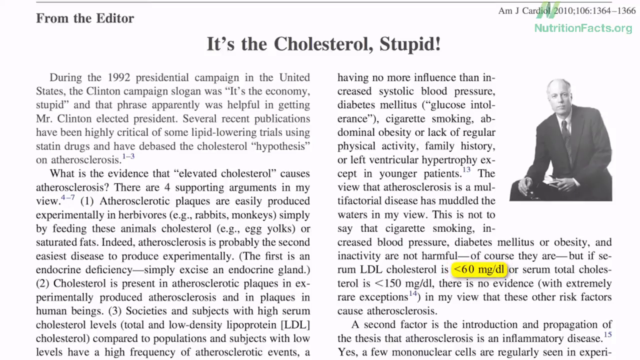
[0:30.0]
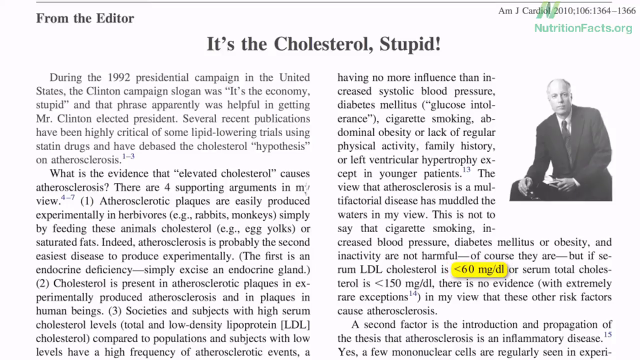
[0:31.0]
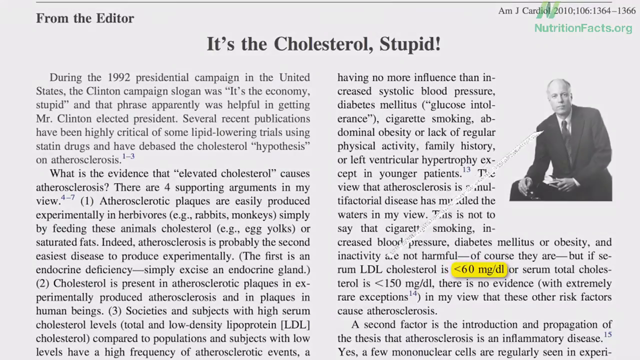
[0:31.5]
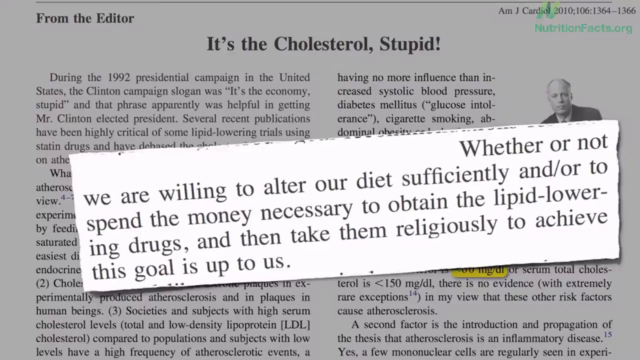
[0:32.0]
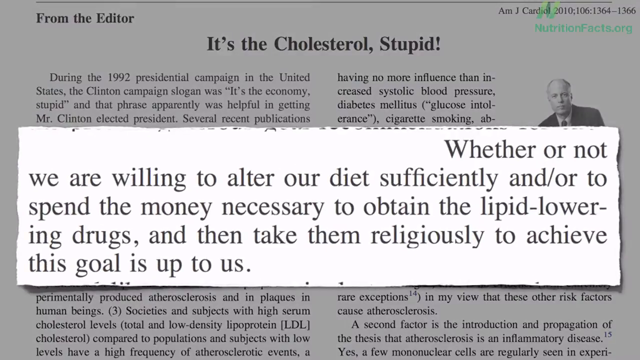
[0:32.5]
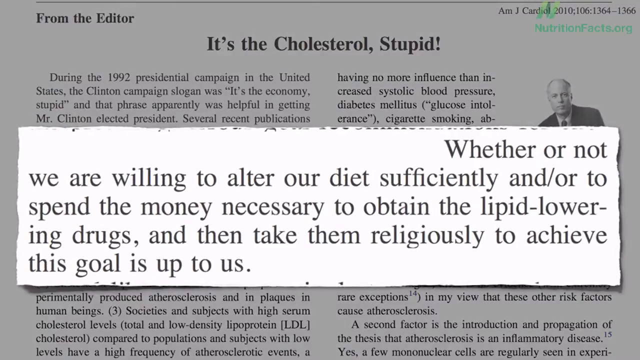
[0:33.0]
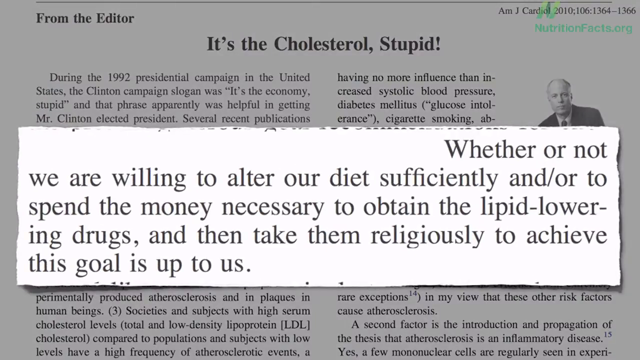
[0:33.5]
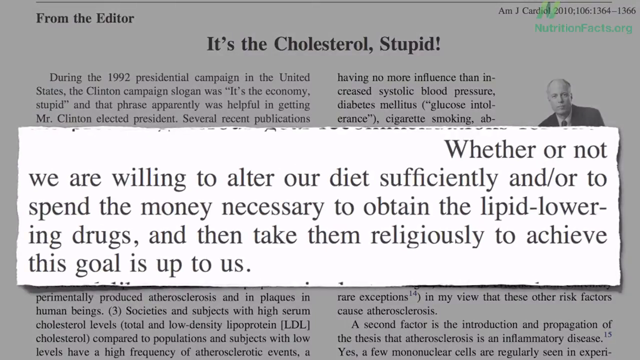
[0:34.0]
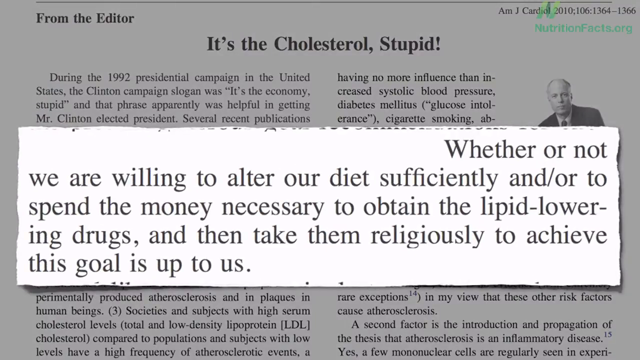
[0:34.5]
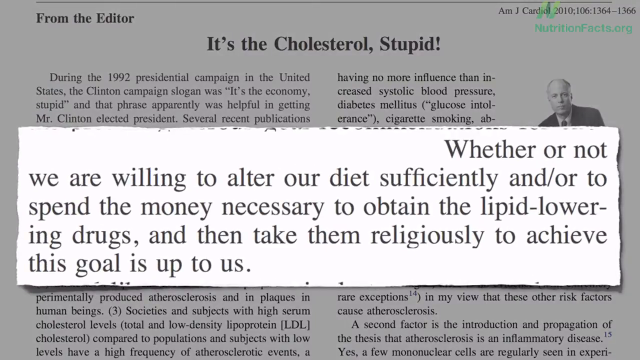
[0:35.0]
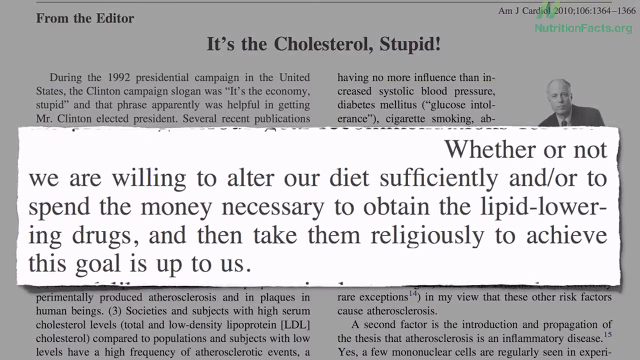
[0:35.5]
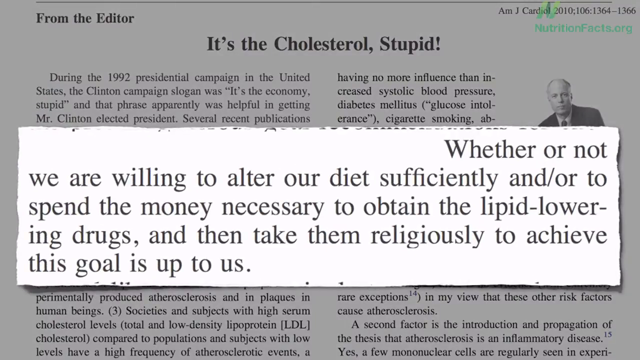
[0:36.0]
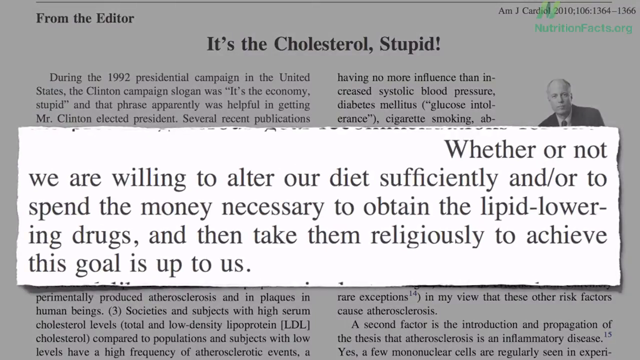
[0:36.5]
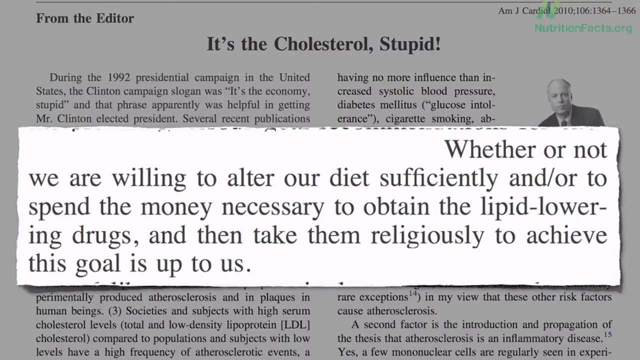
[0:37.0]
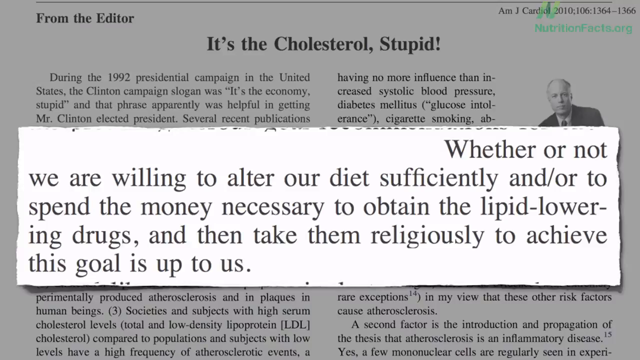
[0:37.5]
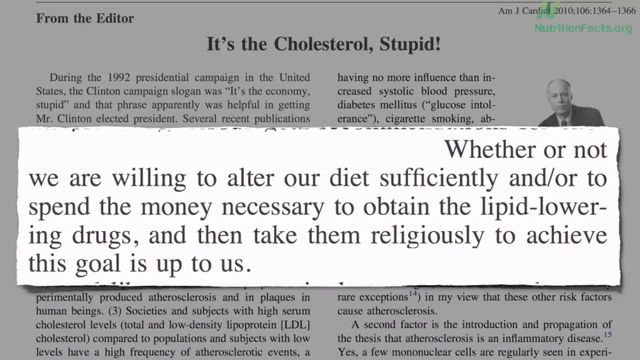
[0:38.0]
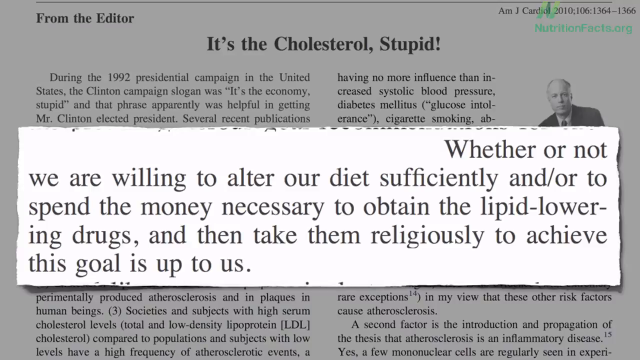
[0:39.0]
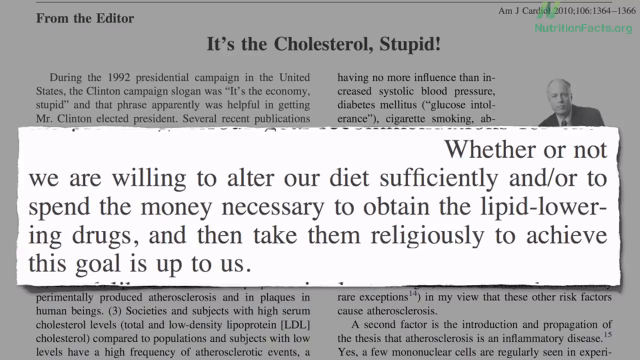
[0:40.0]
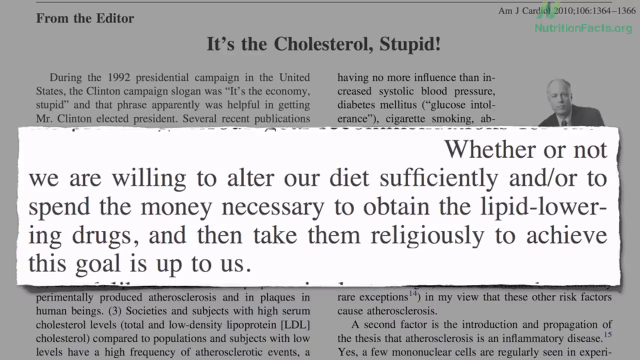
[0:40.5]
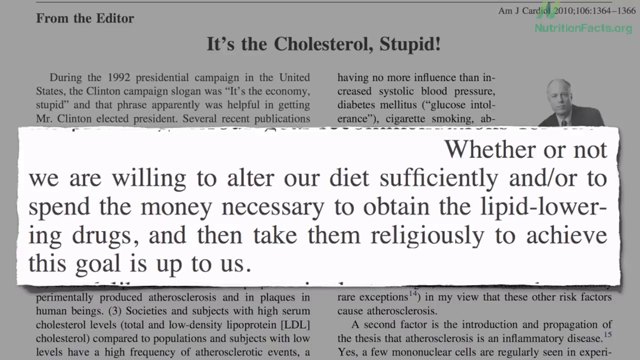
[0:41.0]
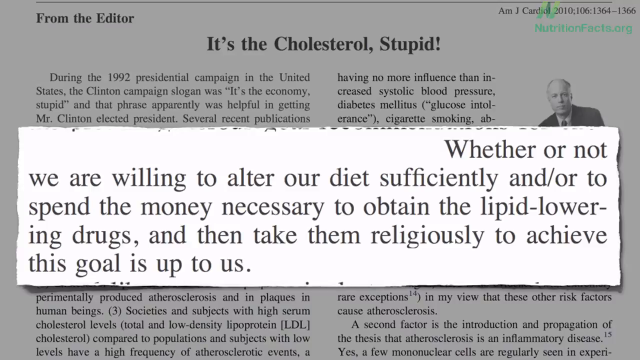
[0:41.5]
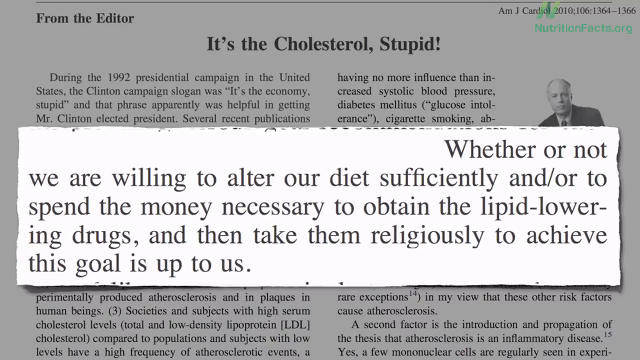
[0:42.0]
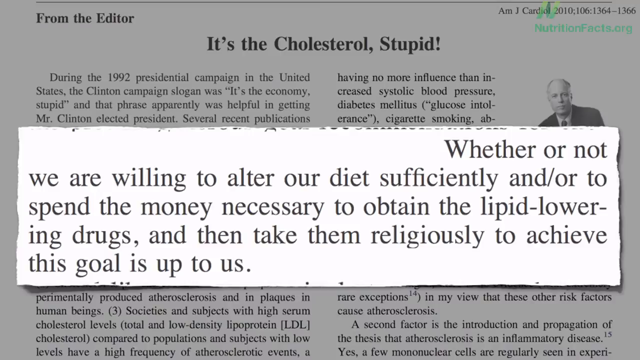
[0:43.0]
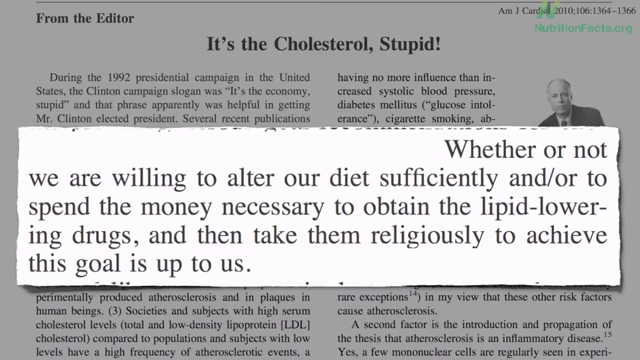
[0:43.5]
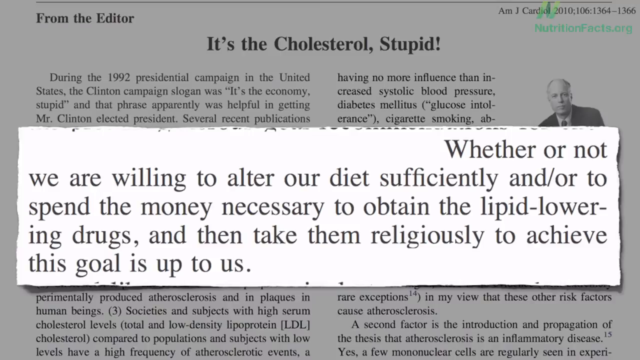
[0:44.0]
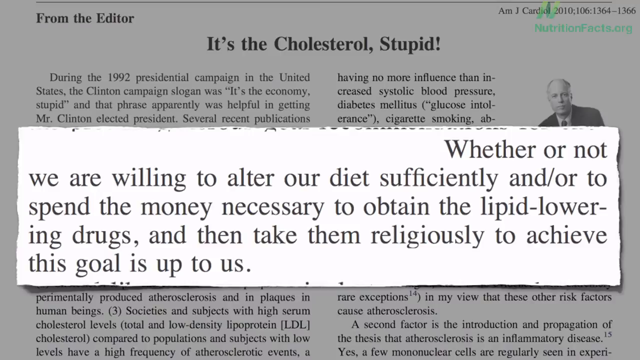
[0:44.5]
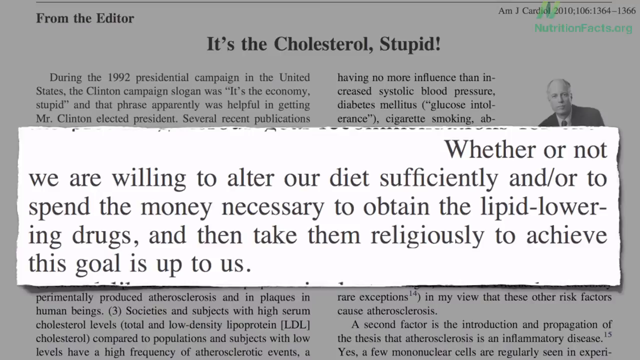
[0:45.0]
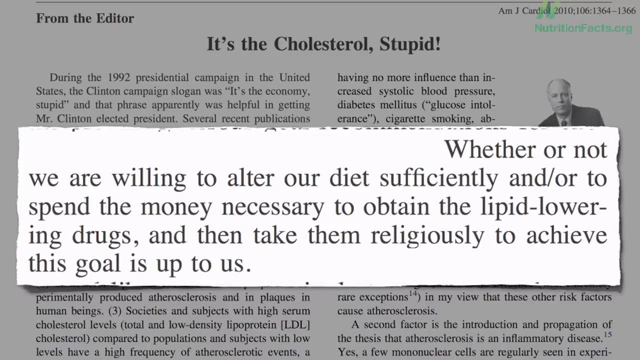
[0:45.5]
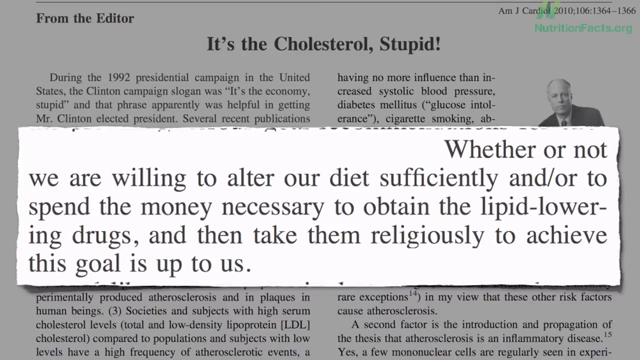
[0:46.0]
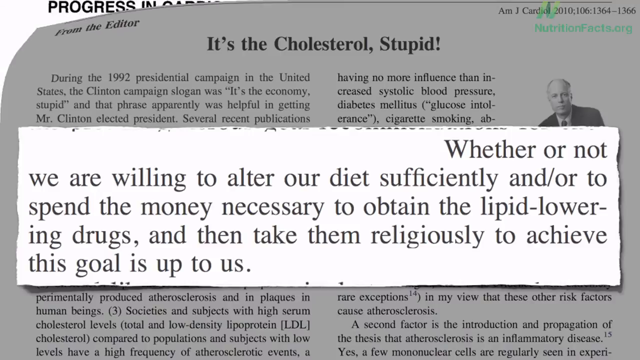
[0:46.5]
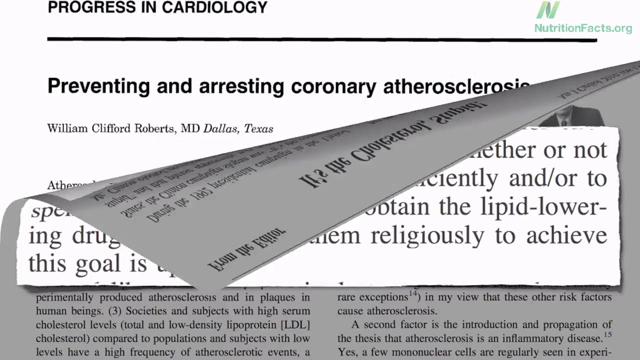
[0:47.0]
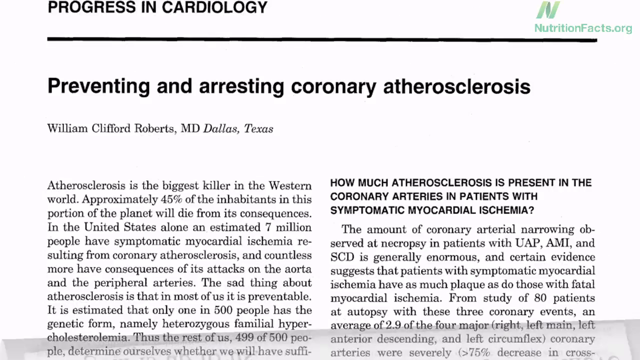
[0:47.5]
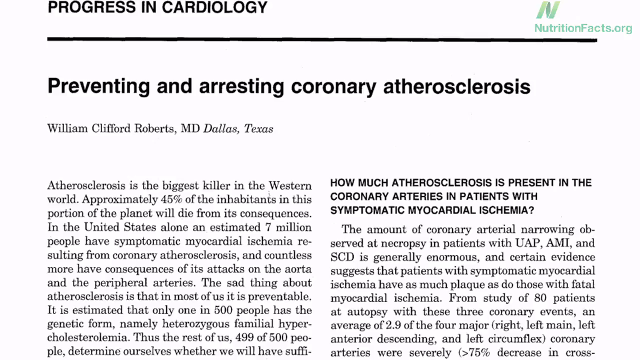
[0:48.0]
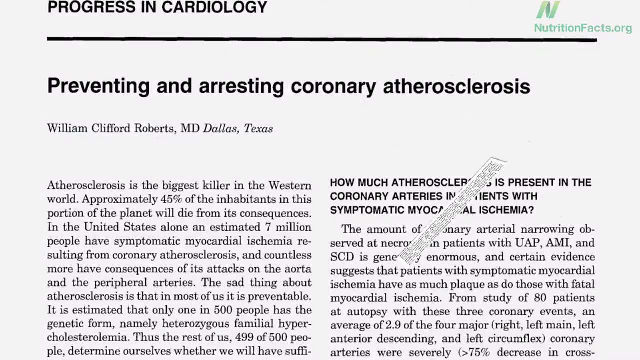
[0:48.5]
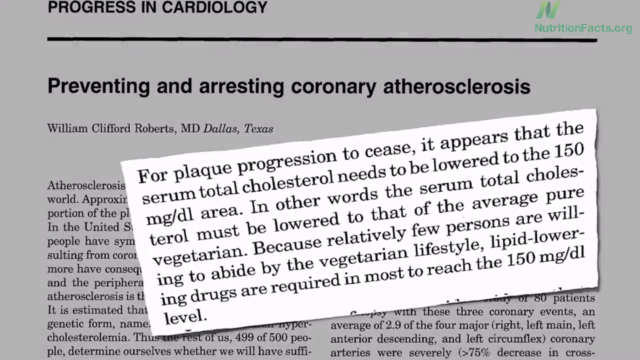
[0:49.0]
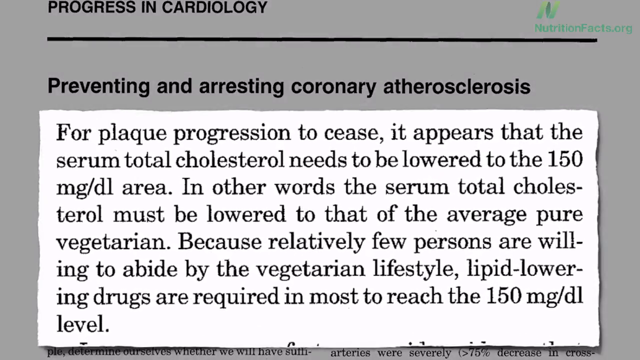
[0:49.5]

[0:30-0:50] A nutritionfacts.org slide with the logo on the top left is overlaid on a page from the American Journal of Cardiology, 2010: a letter to the editor titled "It's the Cholesterol Stupid." An embedded picture shows an unidentified author or editor, a white man, mostly bald, in a jacket, shirt and tie, sitting behind a table and leaning forward confidentially. One element of text is brought out: "whether or not we are willing to alter our diet sufficiently and or to spend the money necessary to obtain the lipid-lowering drugs and then take them religiously to achieve this goal is up to us." A peel-over transition changes to another slide titled "Preventing and Arresting Coronary Sclerosis," which seems to be content from the Progress in Cardiology journal. No date is shown; the author is William Clifford Roberts, MD, from Dallas, Texas. A pop-out highlights text from it: "for plaque progression to cease, it appears that the serum total cholesterol needs to be lowered to the 150 mg area. In other words, serum total cholesterol must be lowered to that of the average pure vegetarian because relatively few persons are willing to abide by the vegetarian lifestyle and lipid-lowering drugs are required in most to reach that level."